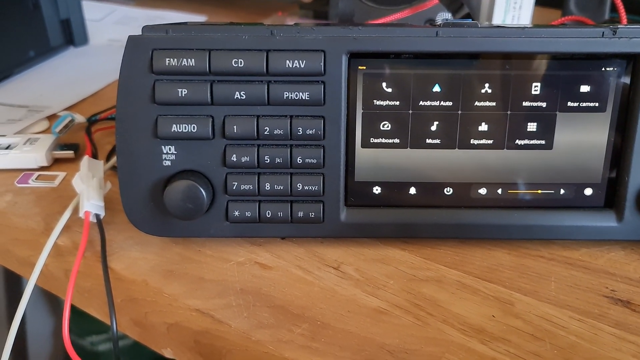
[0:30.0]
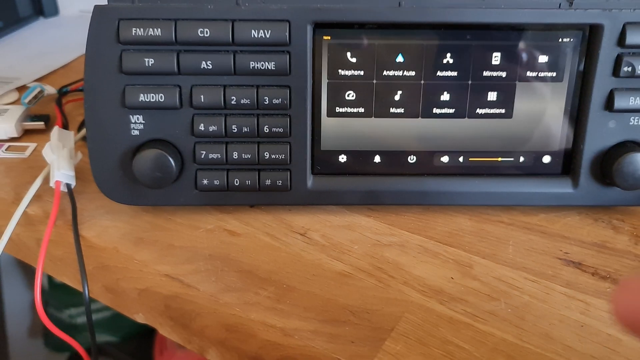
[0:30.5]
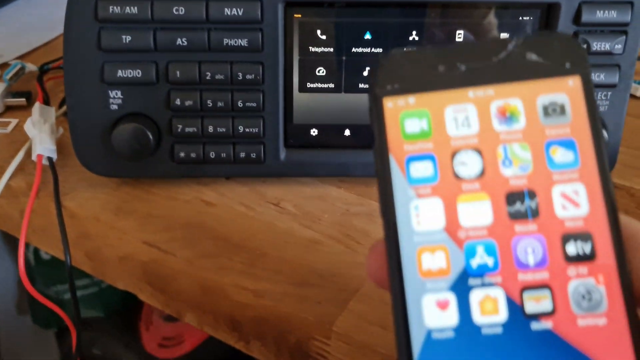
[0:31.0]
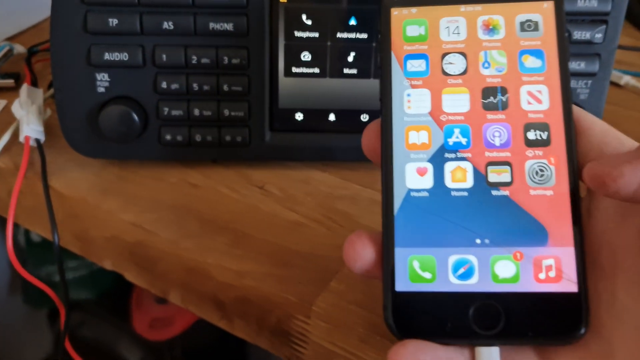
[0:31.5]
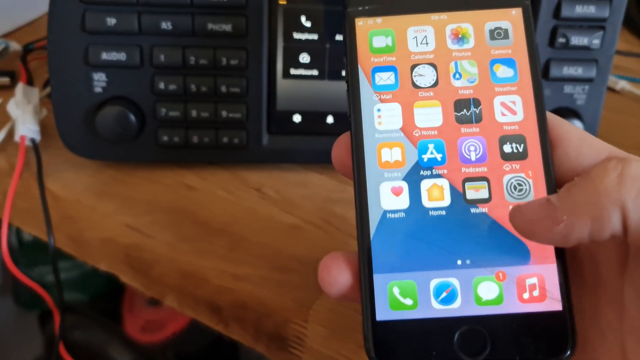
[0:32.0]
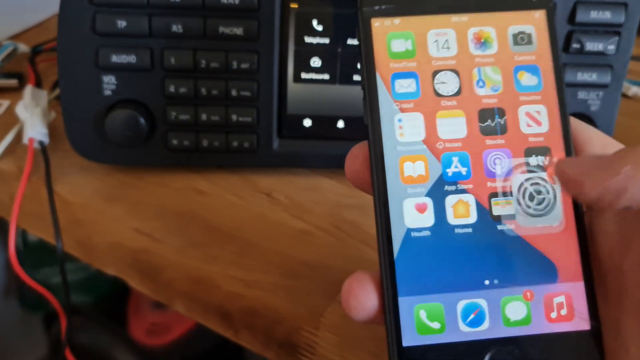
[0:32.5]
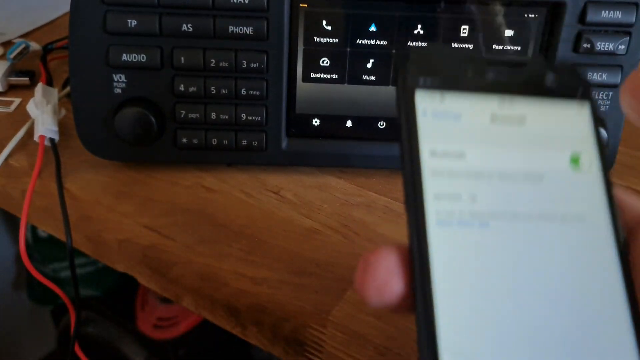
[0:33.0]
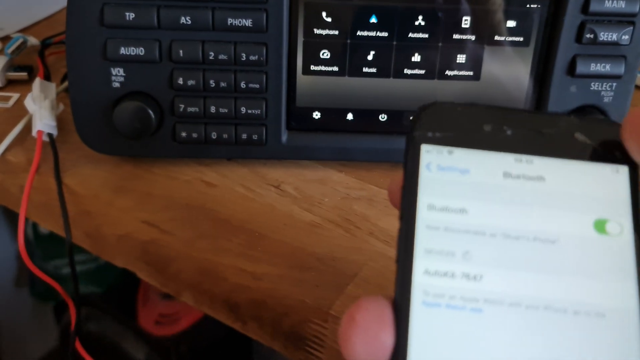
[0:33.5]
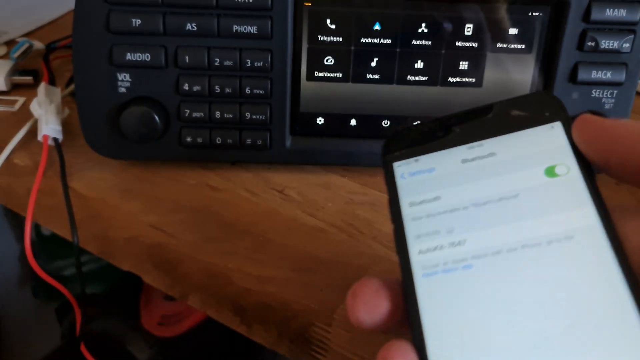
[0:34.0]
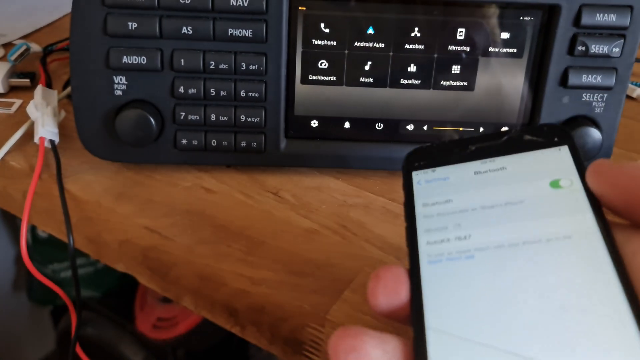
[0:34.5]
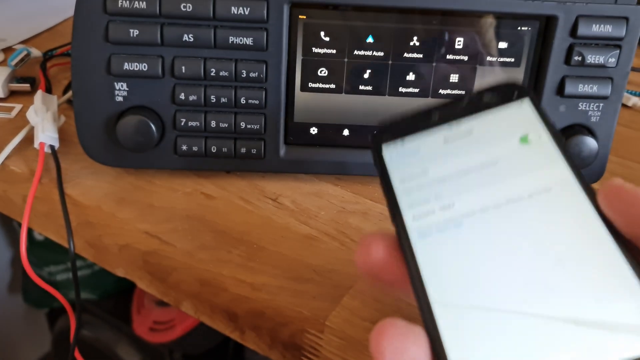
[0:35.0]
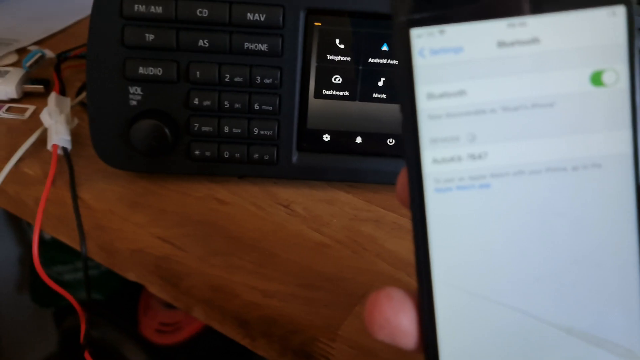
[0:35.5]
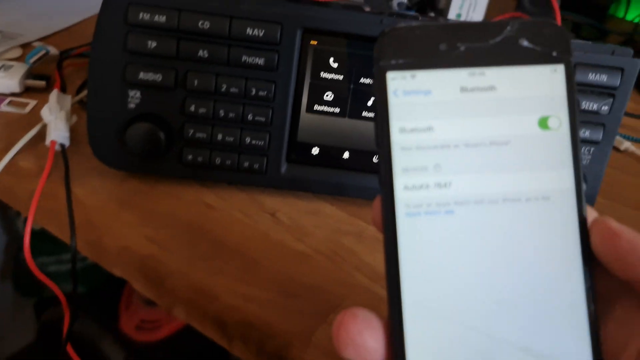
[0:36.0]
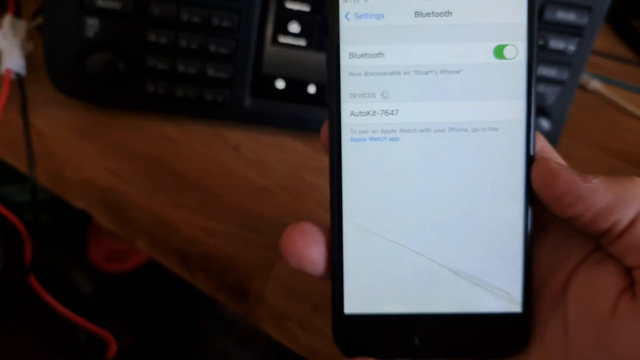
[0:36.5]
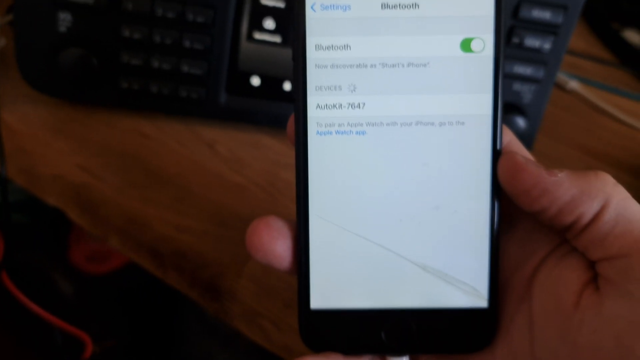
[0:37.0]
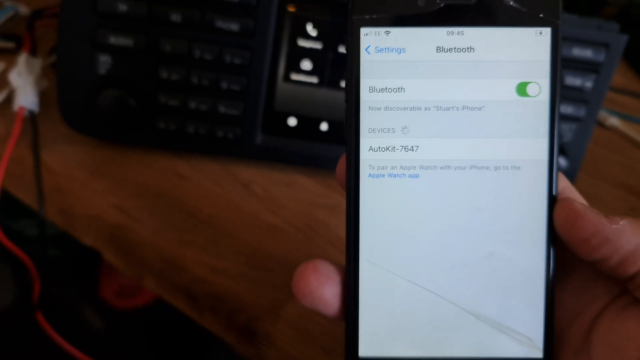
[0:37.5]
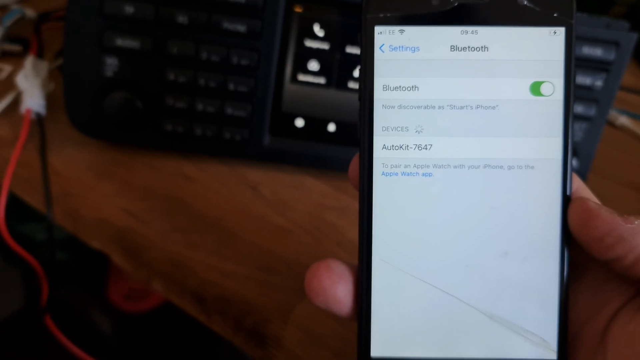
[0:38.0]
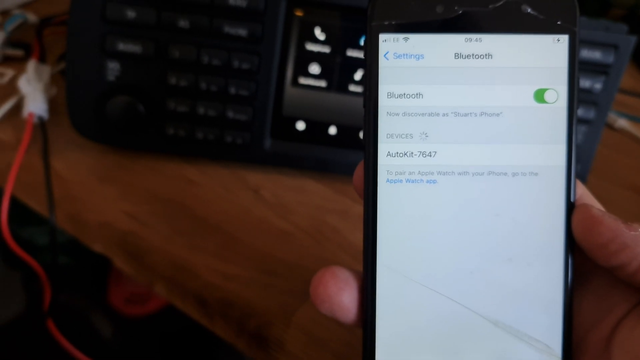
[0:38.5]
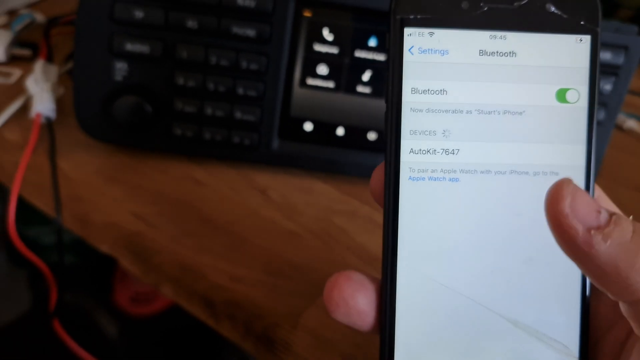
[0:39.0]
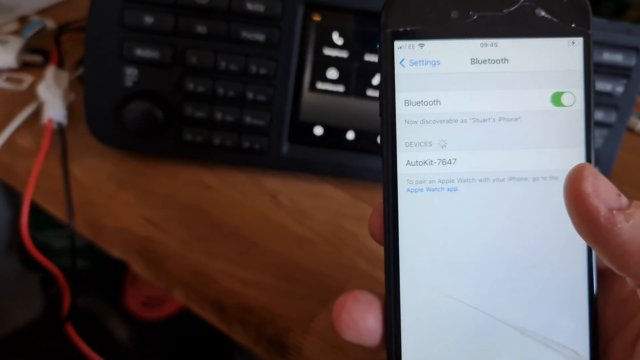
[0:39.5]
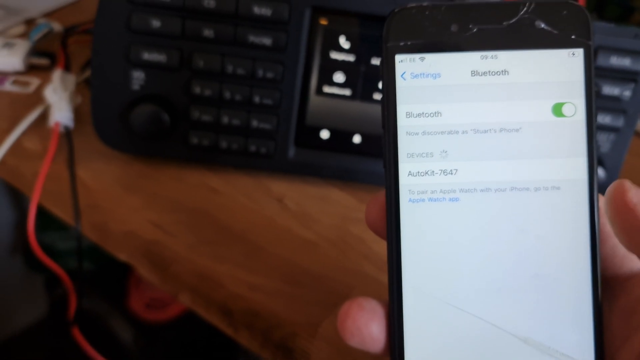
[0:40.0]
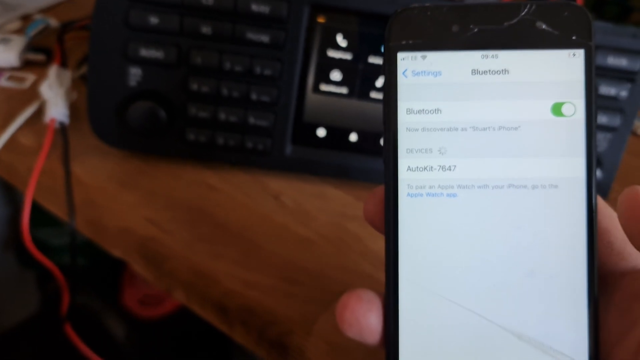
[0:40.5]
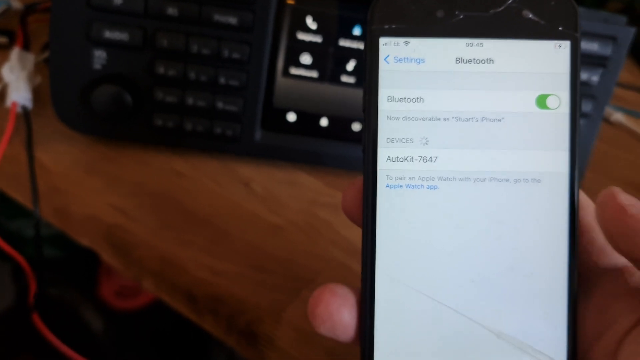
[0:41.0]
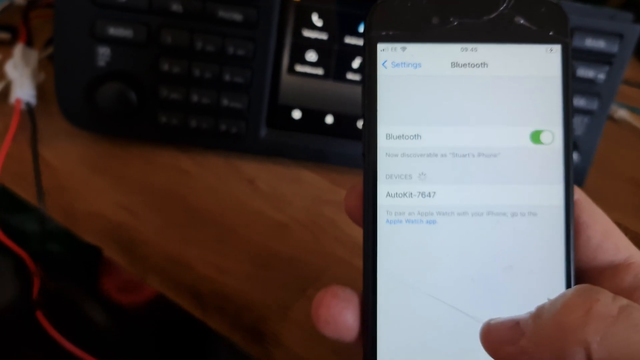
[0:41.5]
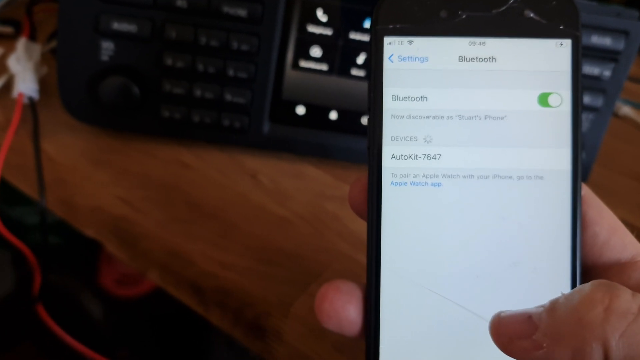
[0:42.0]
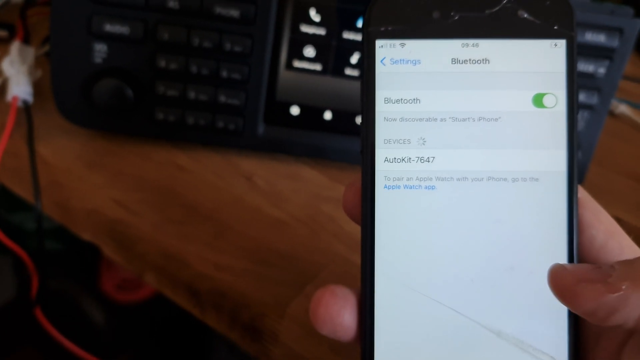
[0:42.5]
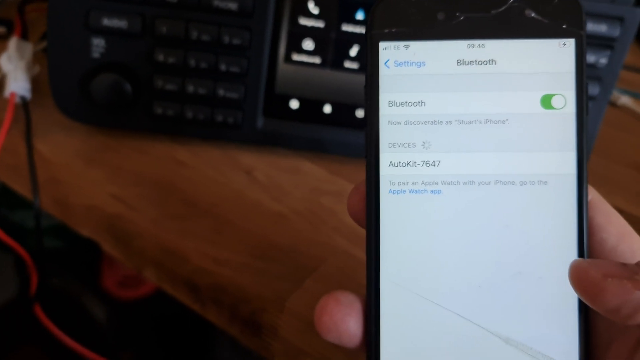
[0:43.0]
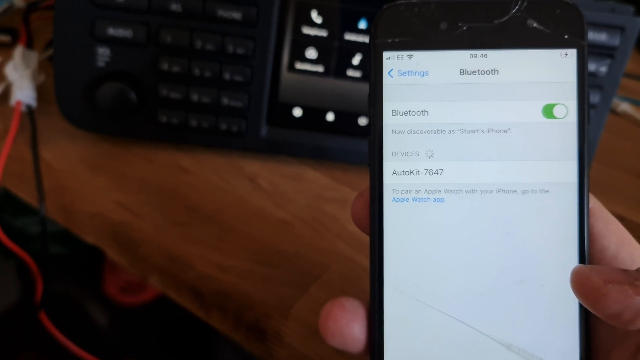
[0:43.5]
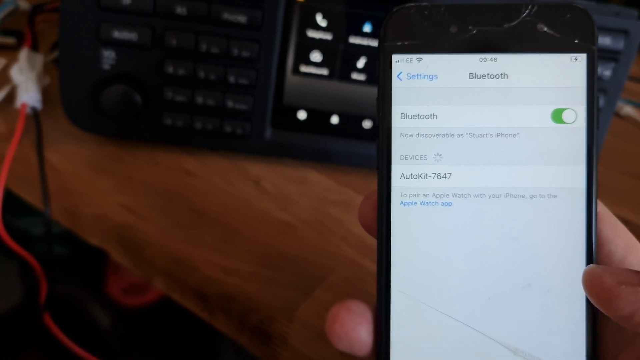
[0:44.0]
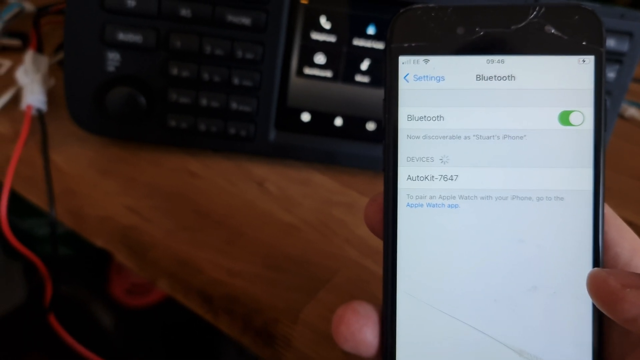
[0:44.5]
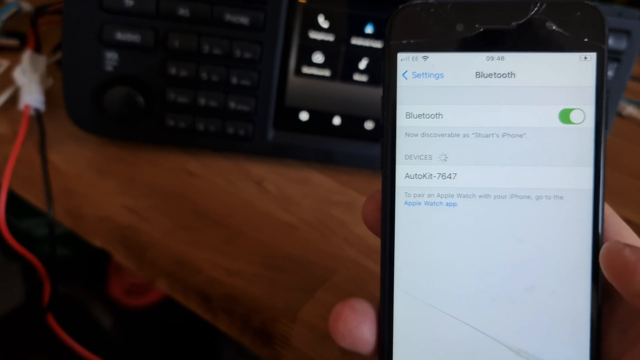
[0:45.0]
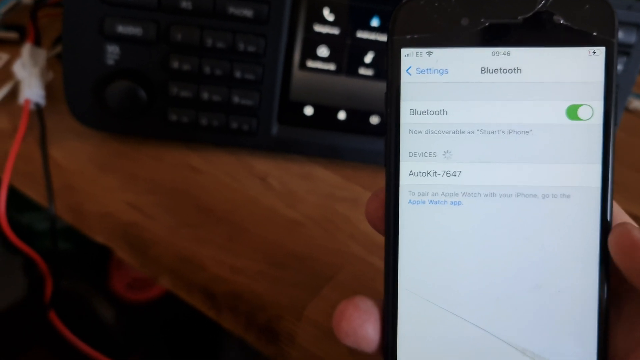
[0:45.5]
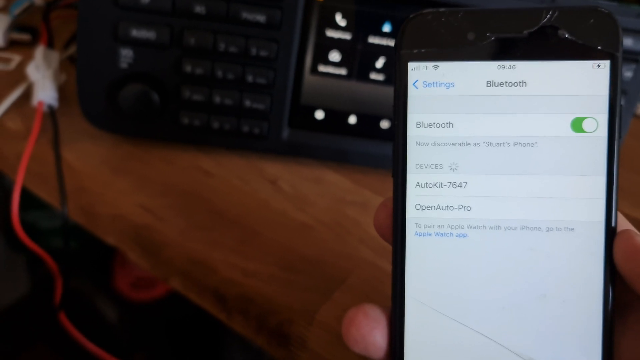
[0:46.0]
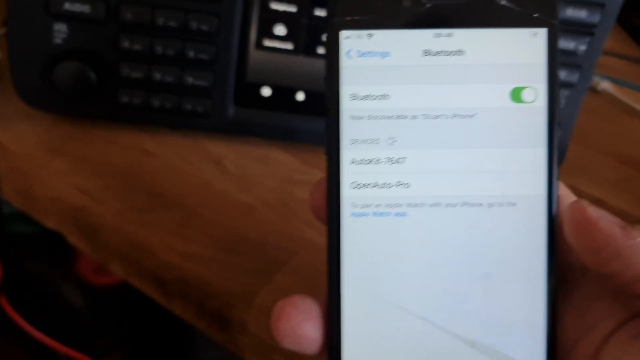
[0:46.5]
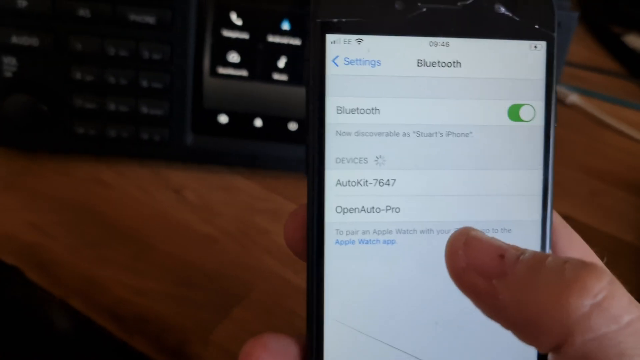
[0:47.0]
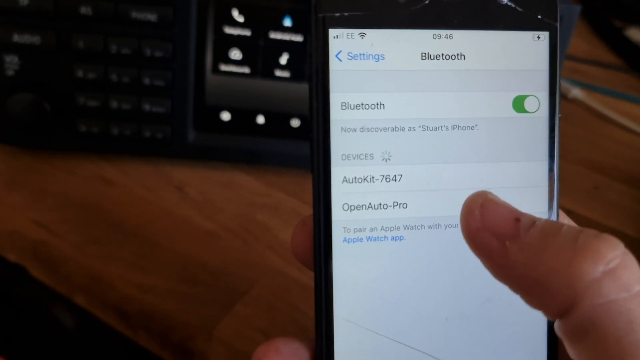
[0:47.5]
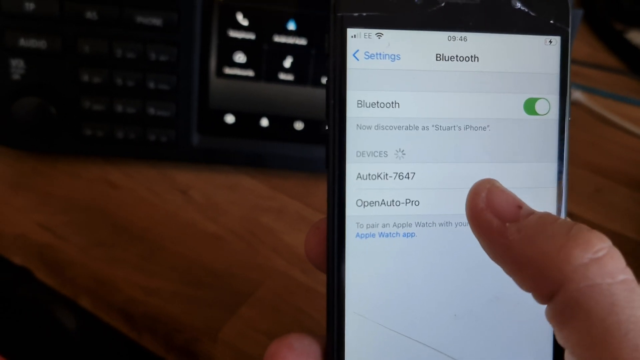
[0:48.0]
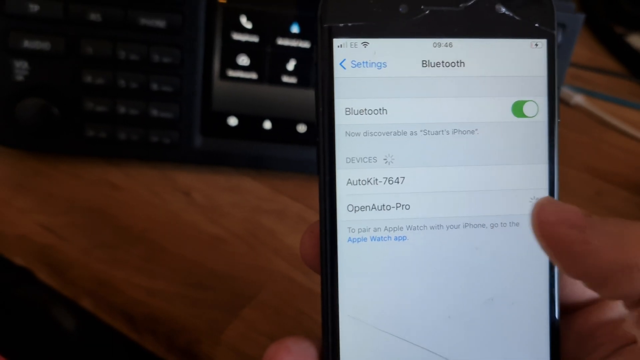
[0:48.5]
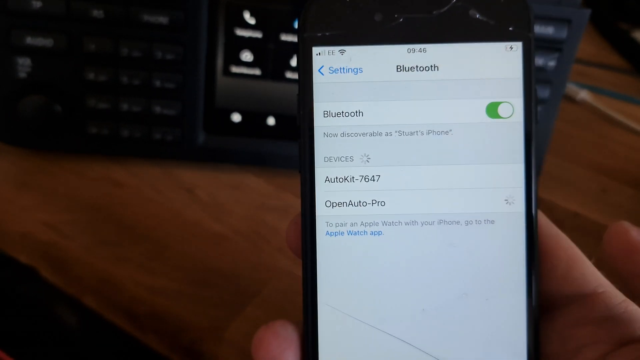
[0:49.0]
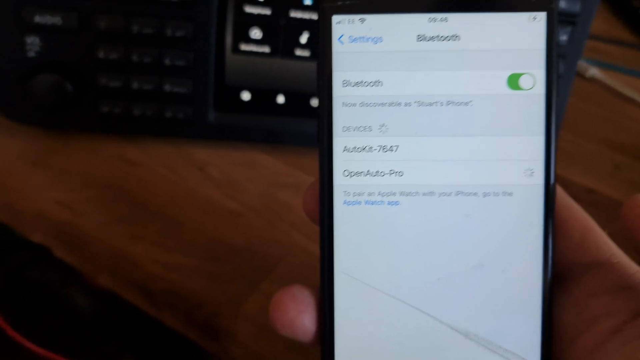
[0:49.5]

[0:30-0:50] A phone, which looks like an iPhone, shows the Bluetooth menu, and the person uses a thumb to control the phone's screen. A connection, Open Auto Pro, appears on the screen, and the phone seems to be connecting to the car radio. The screen, or possibly the screen protector, seems to be cracked, with cracks at the top and at the bottom center of the phone. The cables coming out of the radio are shown again; some of them are glued together. A SIM card, a USB stick and some other knickknacks are on the table.